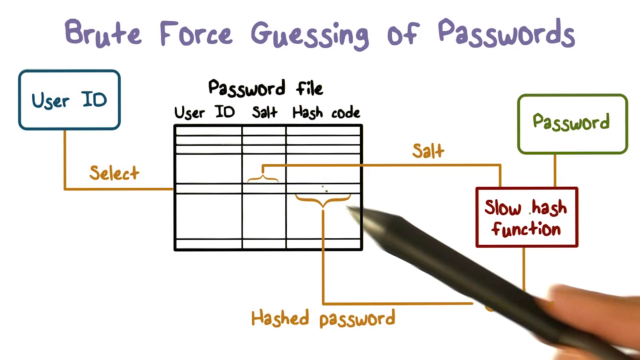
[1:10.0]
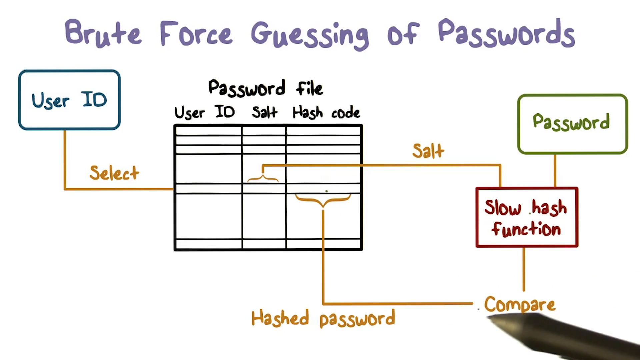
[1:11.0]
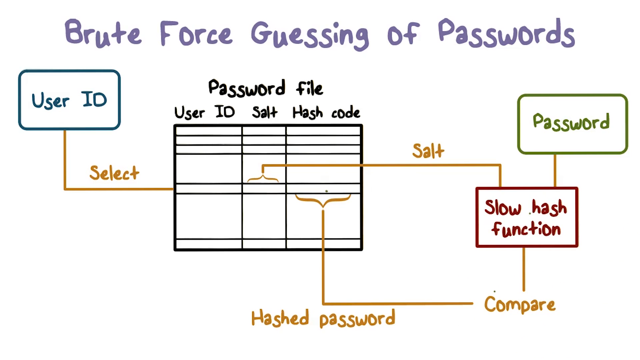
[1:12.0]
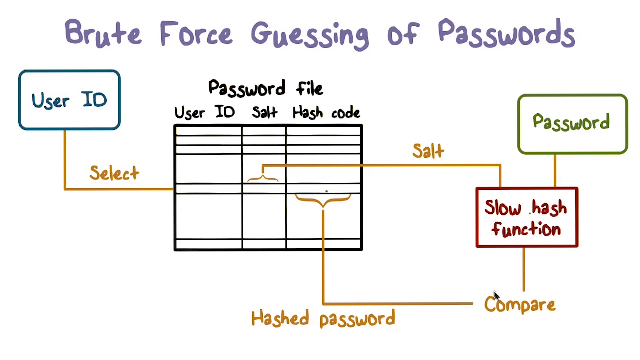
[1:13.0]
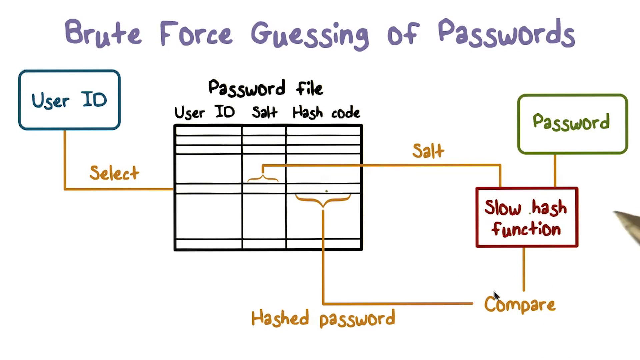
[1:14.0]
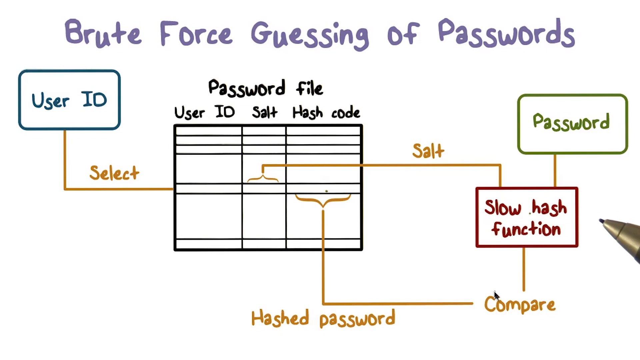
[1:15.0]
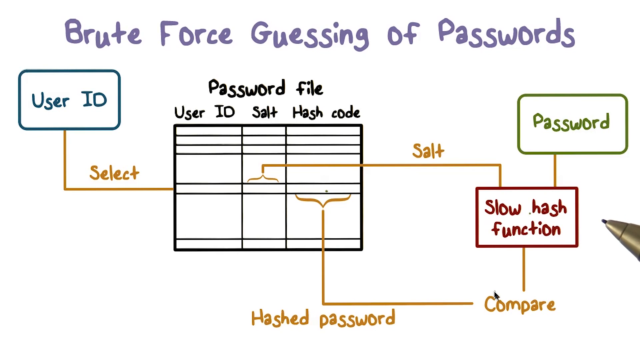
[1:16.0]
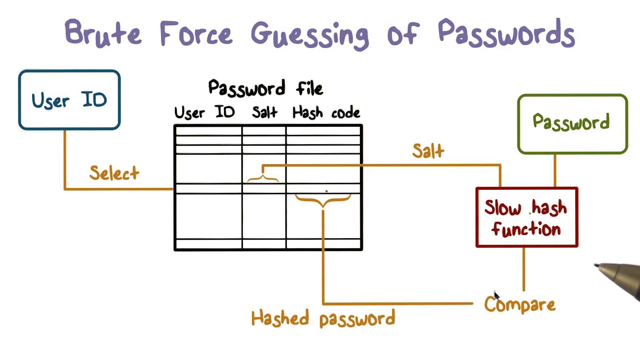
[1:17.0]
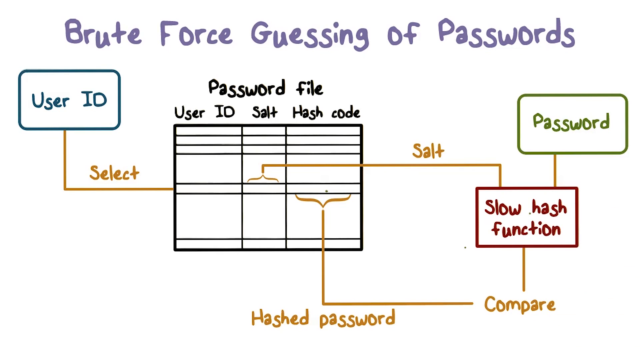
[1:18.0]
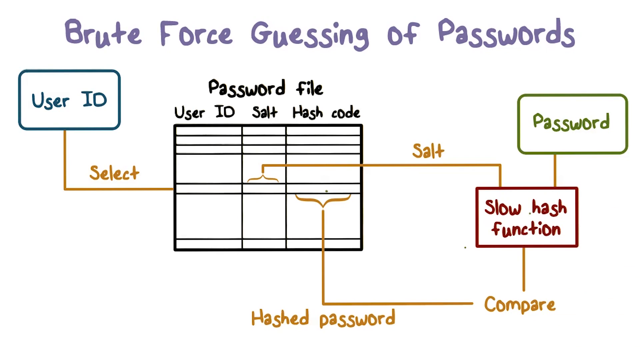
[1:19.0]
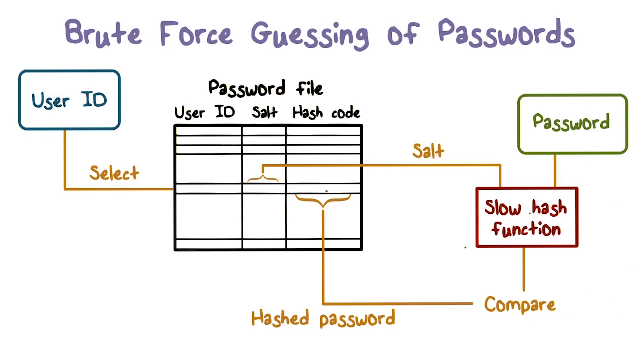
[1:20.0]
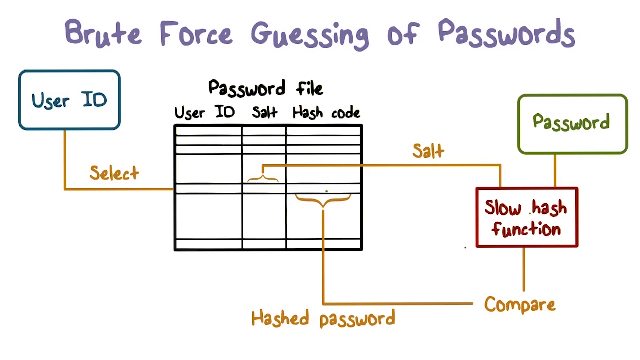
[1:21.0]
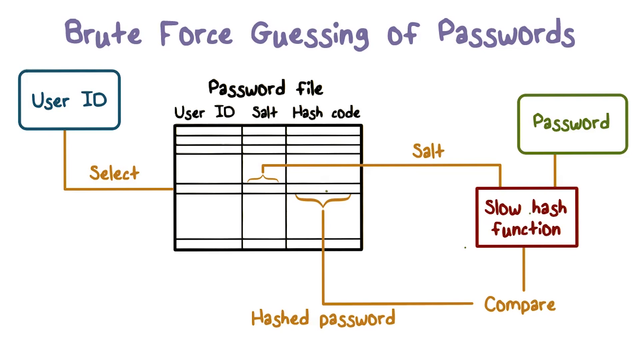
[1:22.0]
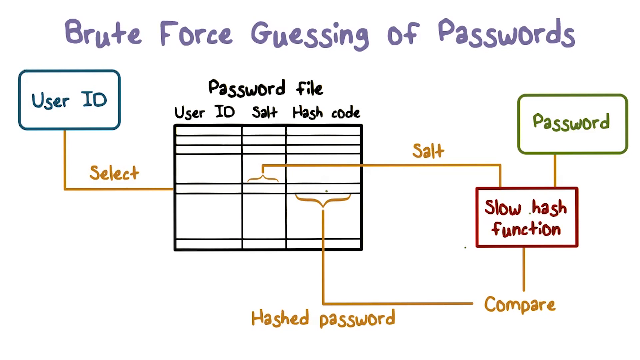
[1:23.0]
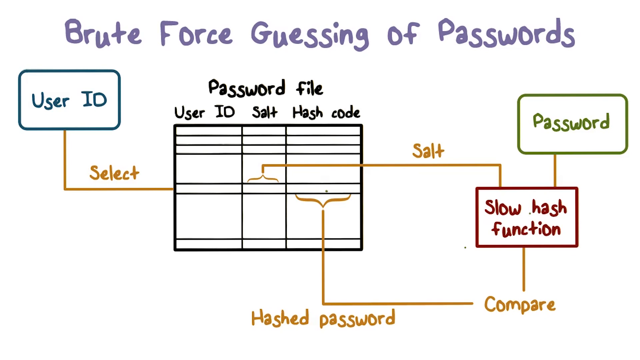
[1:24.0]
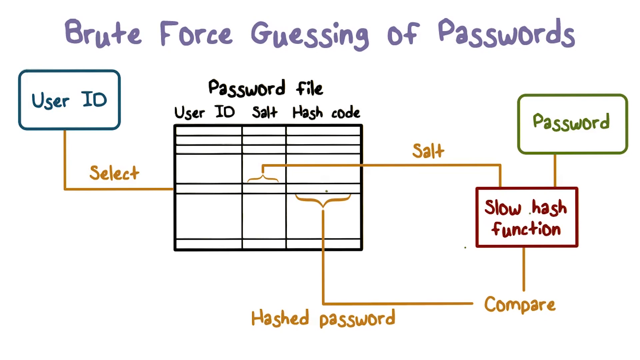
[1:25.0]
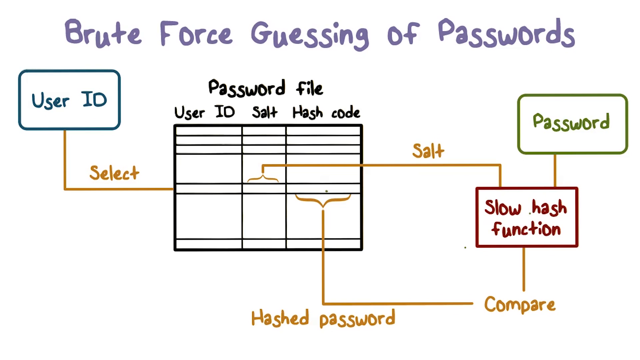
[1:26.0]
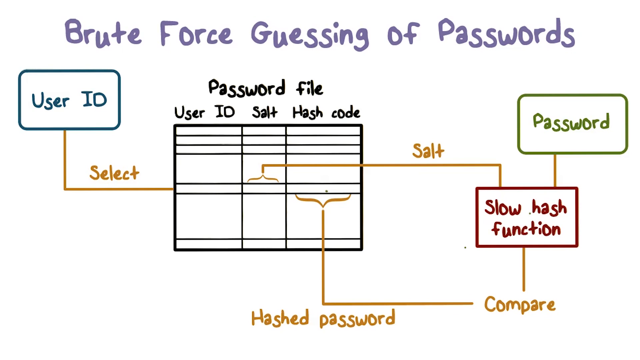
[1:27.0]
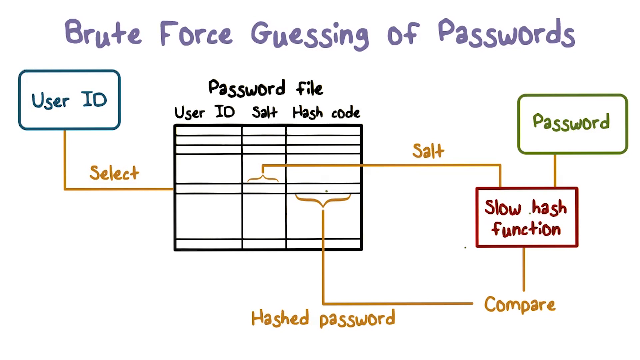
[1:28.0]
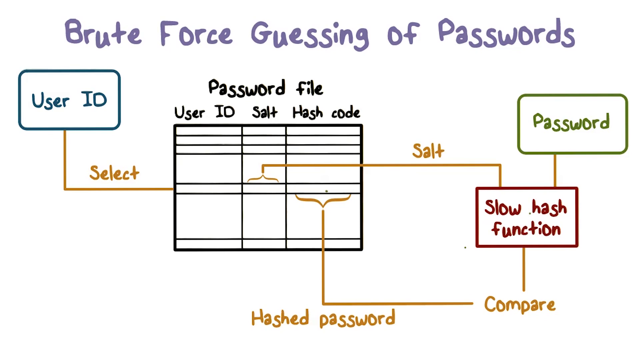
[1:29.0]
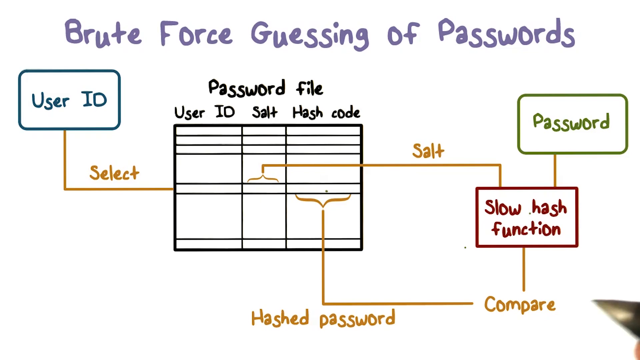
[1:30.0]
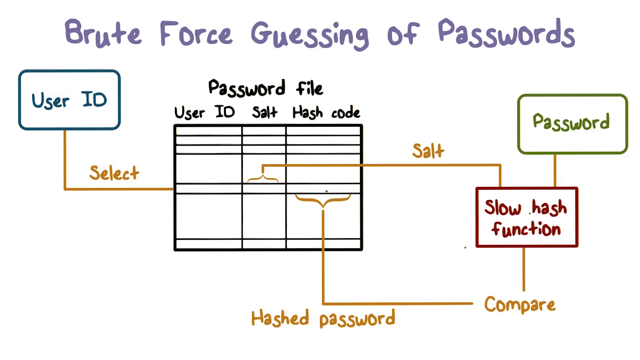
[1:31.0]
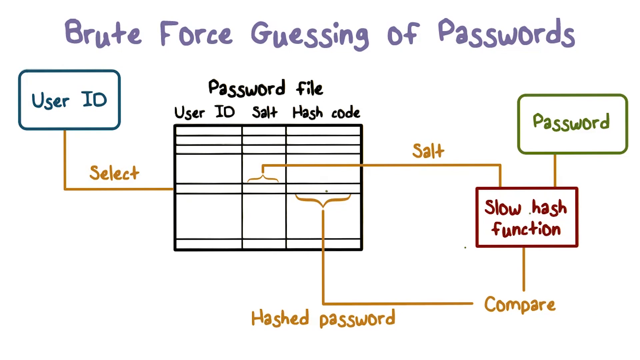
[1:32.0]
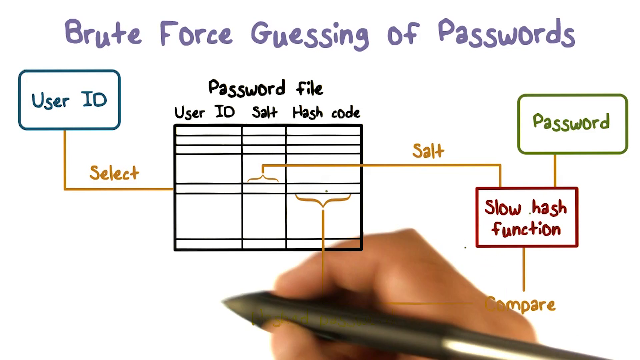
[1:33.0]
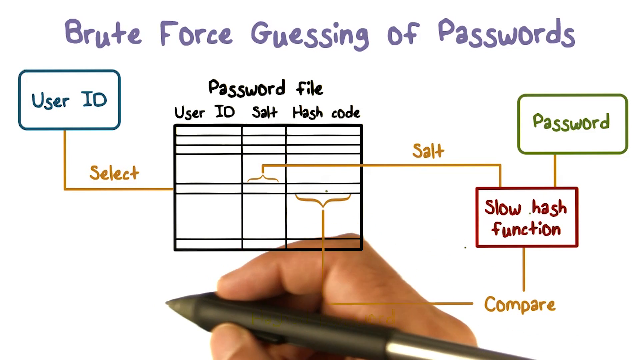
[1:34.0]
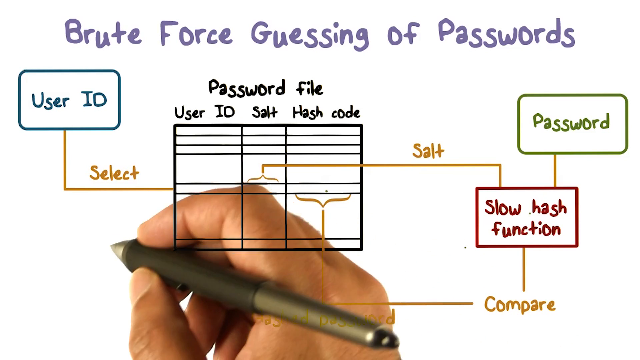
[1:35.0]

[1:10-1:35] The same screen with a white background shows the password file data table in the center left, still with no actual values. The first column is for the user ID, the second column looks like "SAL" and a plus sign or says "salt," and the last column is for the hash code. A blue-outlined call-out box says "user ID," and yellow horizontal and vertical connecting lines labeled "select" are directed toward the user ID column. The second and third columns connect to the slow hash function, a red-outlined box with red text, where the values are compared, leading to a green output box that says "password." The pen is off to the right-hand side of the screen, gesturing on that side by the password and slow hash function boxes. The hand goes off screen to the right, comes back into the screen, and moves to the lower left; the person looks like they are getting ready to write something at the top of the screen with the ballpoint pen. The hand and pen are real, not animated, and the text looks like it is projected onto the plain white screen, so the hand appears to be behind or underneath the projected text.